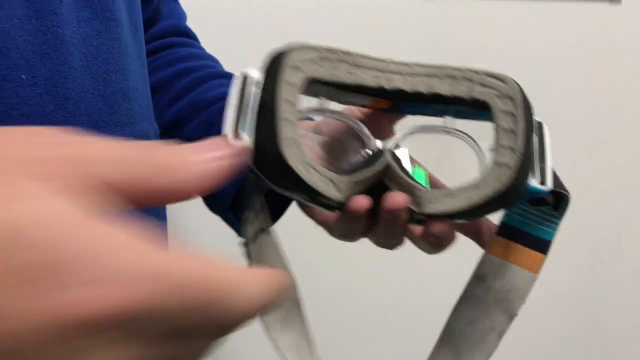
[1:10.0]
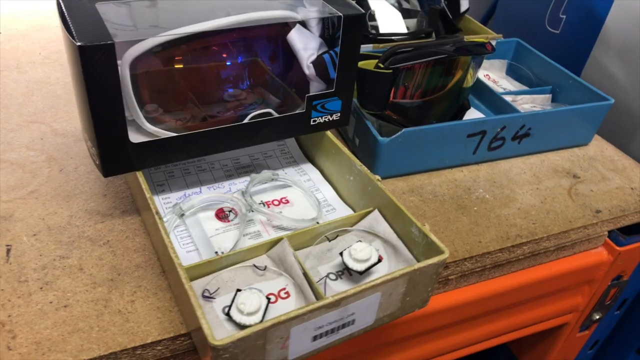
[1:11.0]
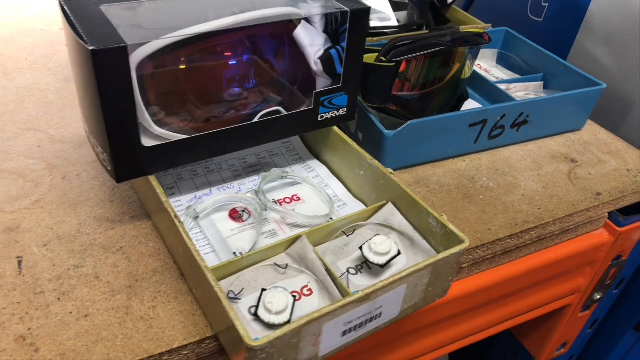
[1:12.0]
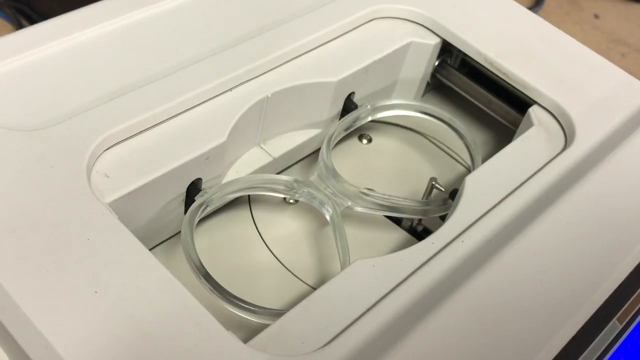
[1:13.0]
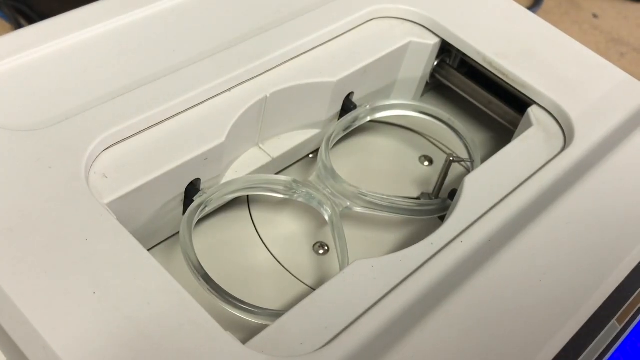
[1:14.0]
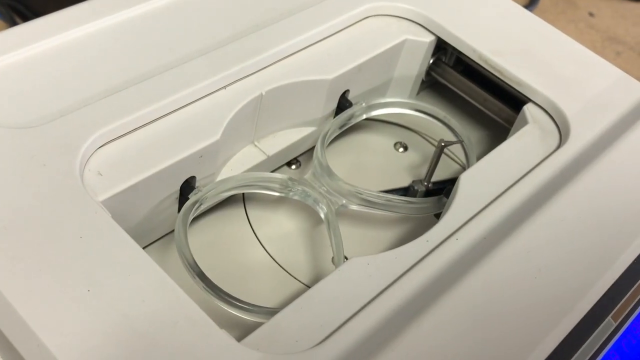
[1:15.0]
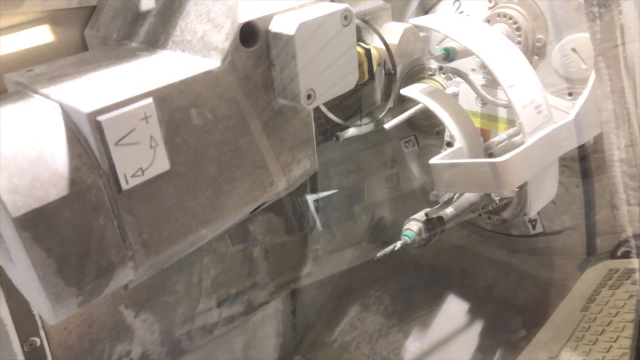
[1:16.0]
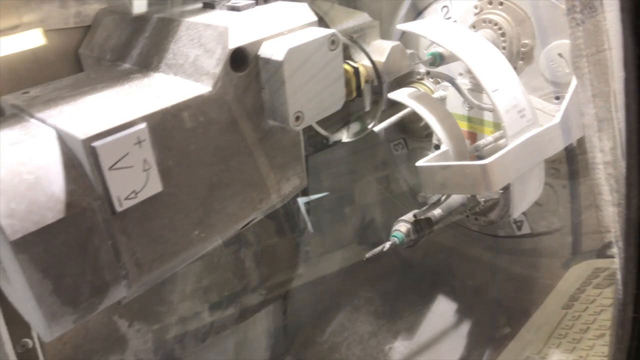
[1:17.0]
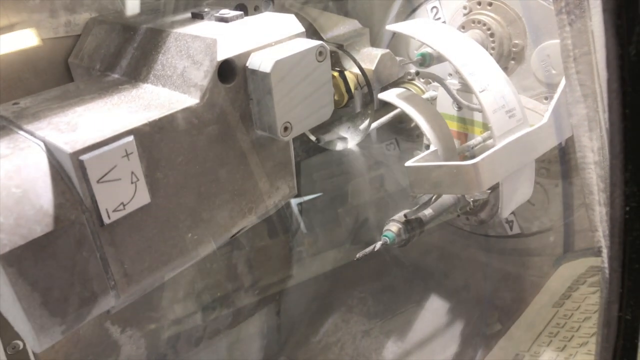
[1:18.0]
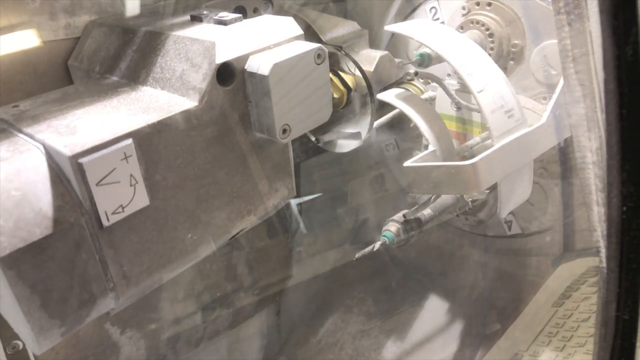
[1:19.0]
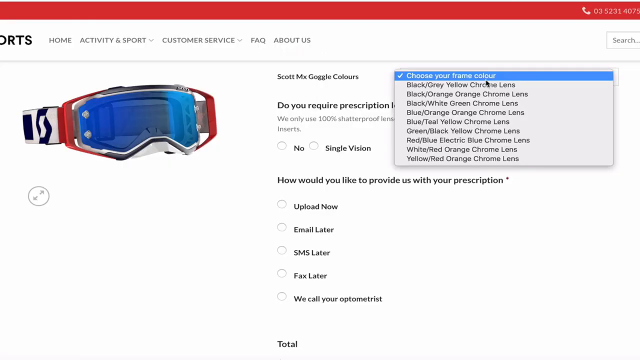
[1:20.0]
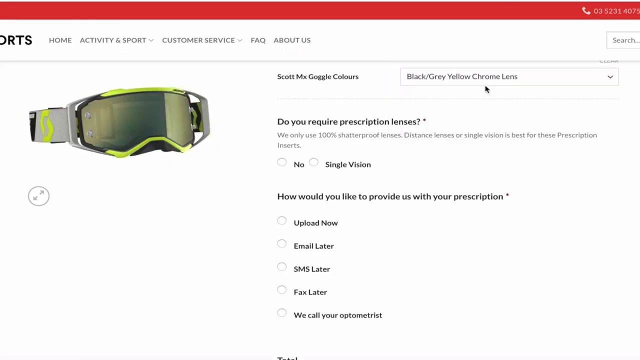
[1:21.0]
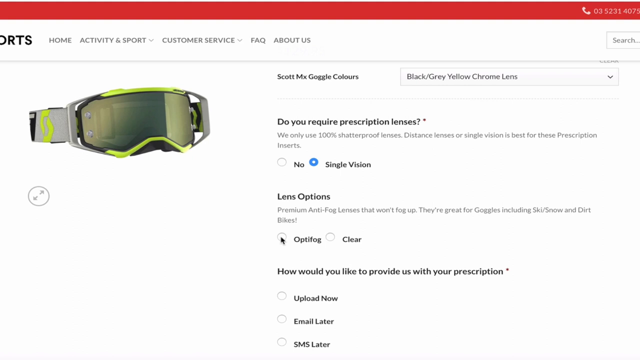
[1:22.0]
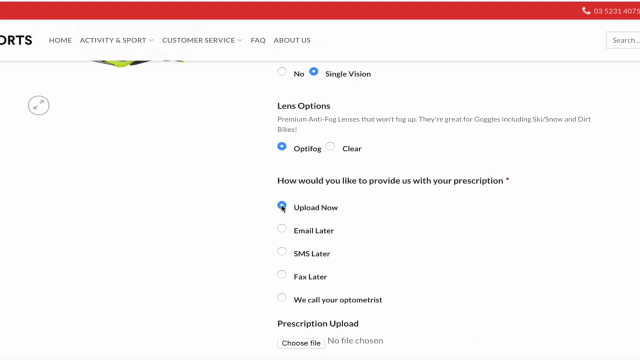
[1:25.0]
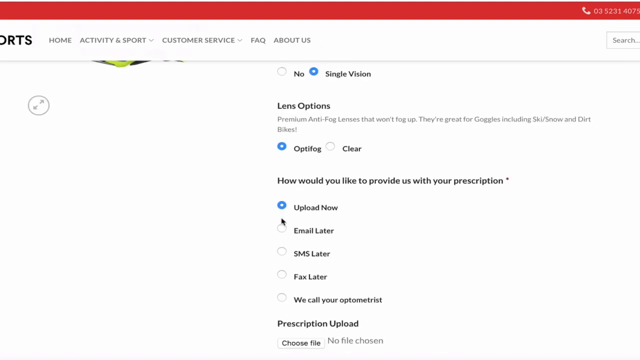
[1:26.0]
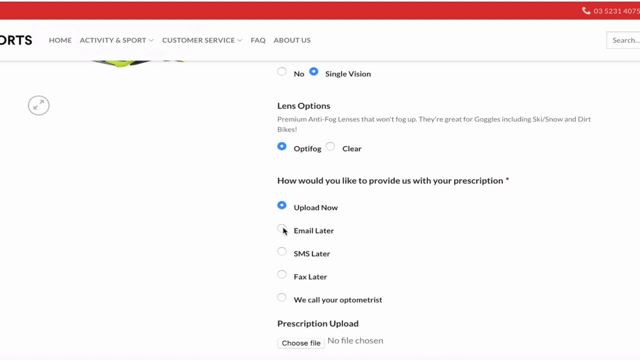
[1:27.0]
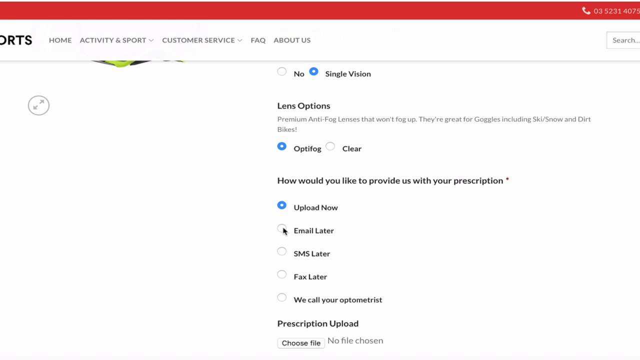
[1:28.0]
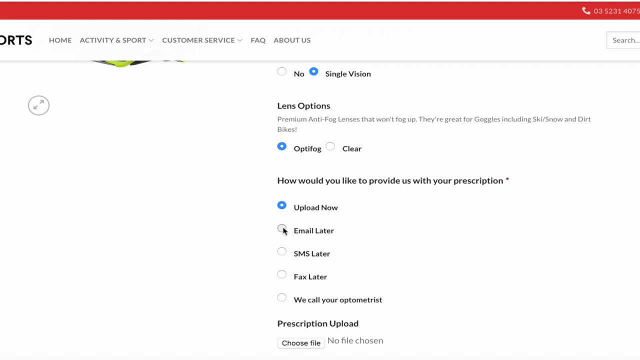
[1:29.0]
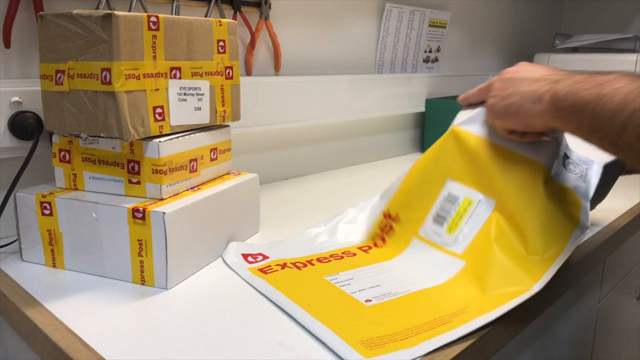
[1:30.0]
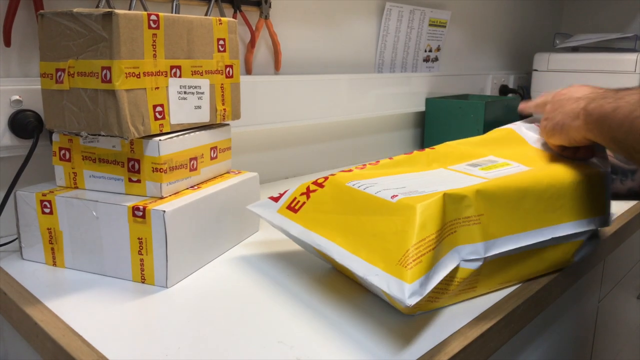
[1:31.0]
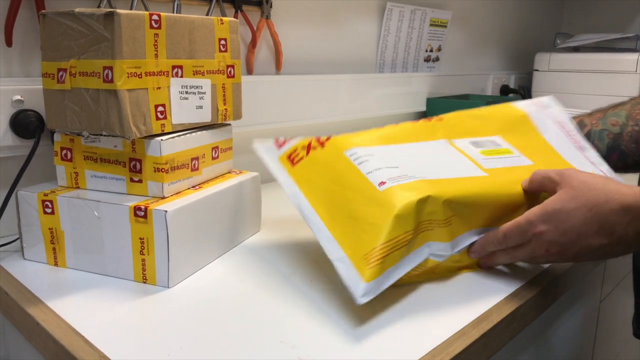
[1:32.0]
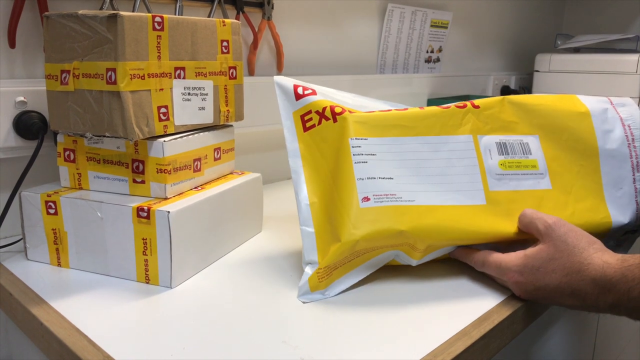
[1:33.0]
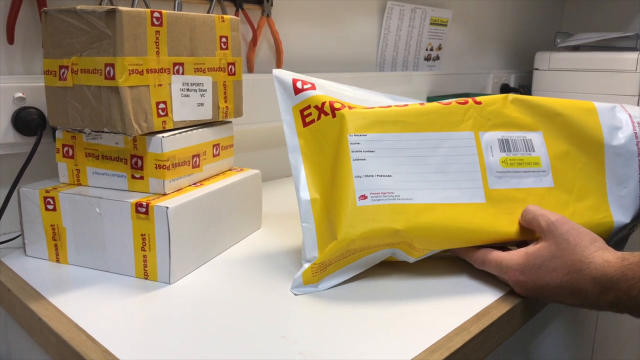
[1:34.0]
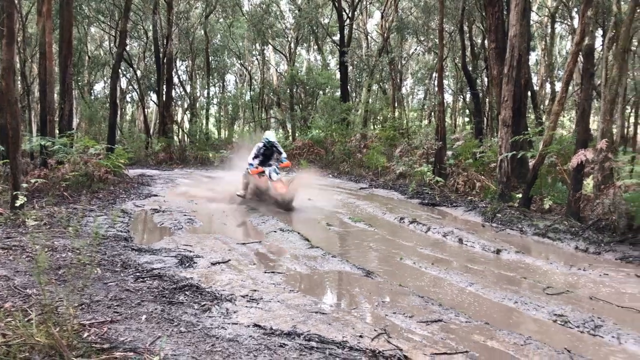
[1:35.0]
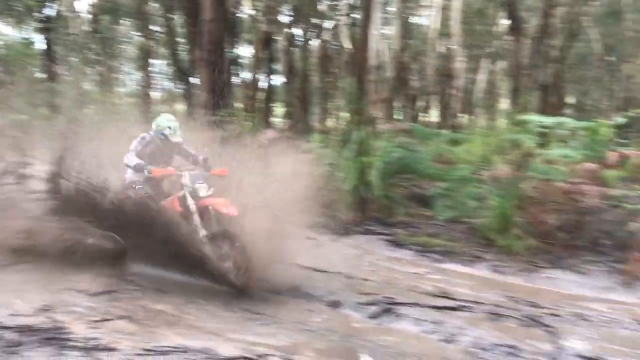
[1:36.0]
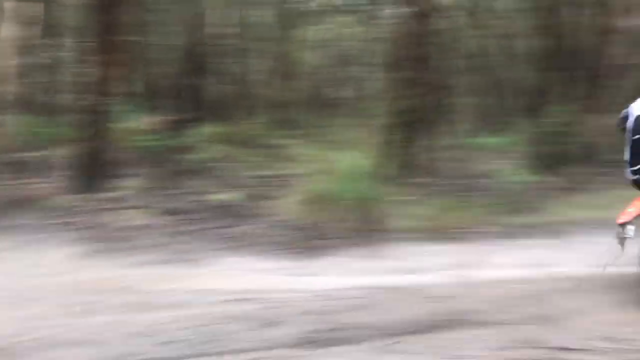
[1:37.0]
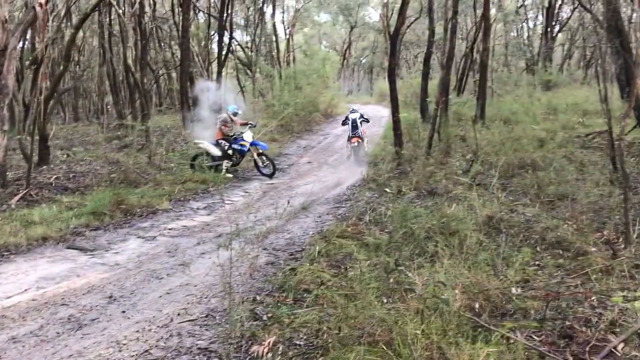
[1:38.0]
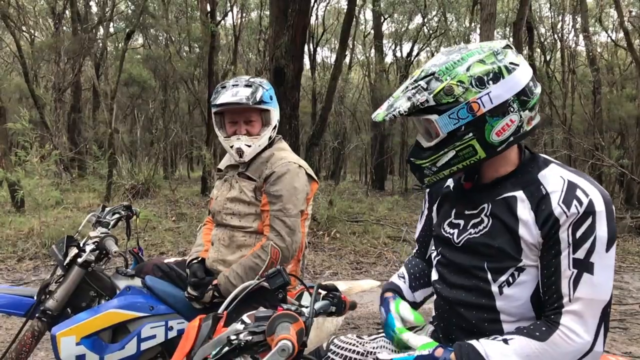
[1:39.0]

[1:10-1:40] A close-up shows what seems to be a microwave, some of the goggles, and a plastic bin beside it on a wooden table. Another scene shows a rotating device that almost looks maybe like a microscope, or a device that possibly makes or shows off the lenses. A further scene looks to show the possible creation of the lenses; a few different devices seem to be used, including a device that cuts out the lenses. The video then moves to their web application, which asks whether you require prescription lenses, shows lens options, and explains how to provide prescription details and how you would receive your goggles. It then transitions to someone riding a dirt bike down a road.